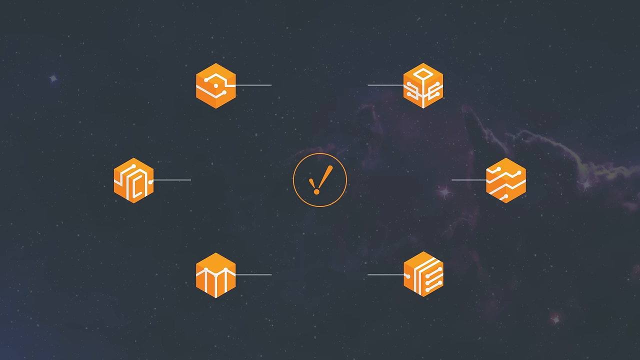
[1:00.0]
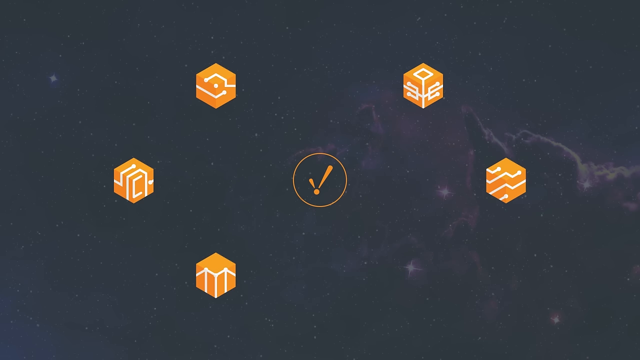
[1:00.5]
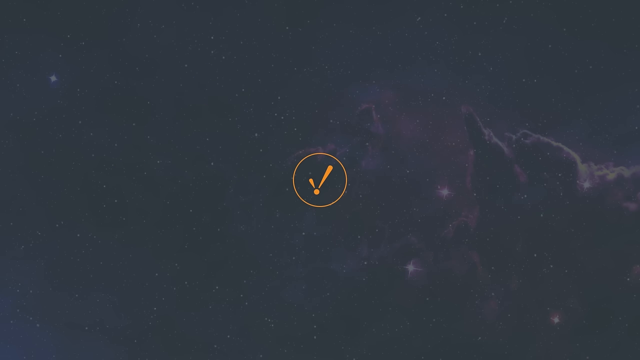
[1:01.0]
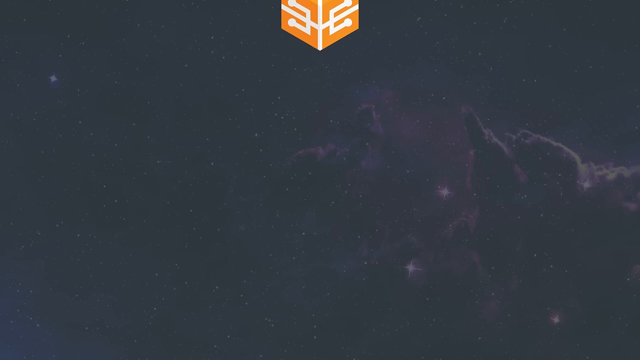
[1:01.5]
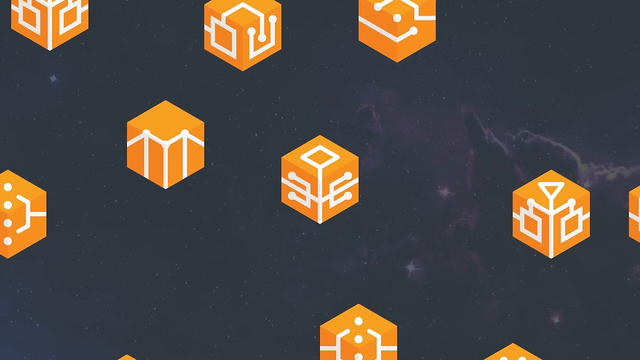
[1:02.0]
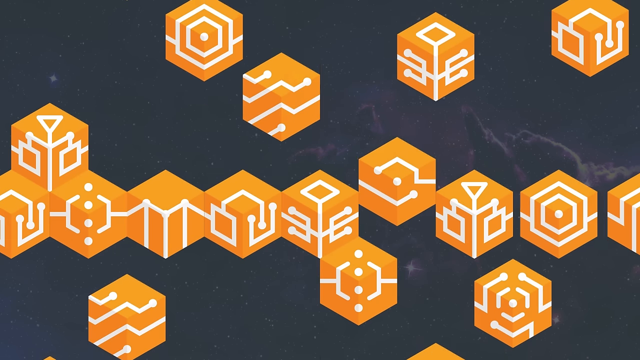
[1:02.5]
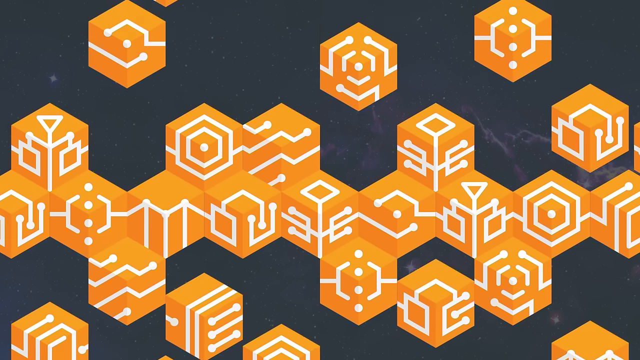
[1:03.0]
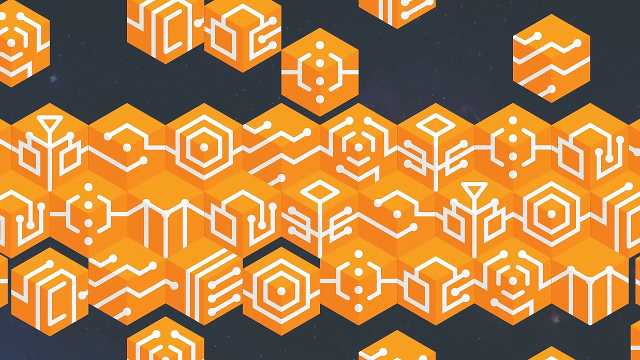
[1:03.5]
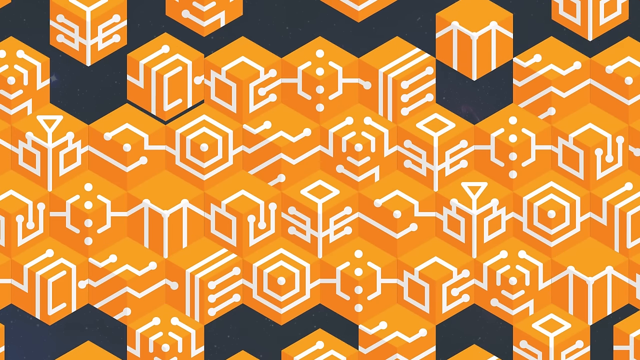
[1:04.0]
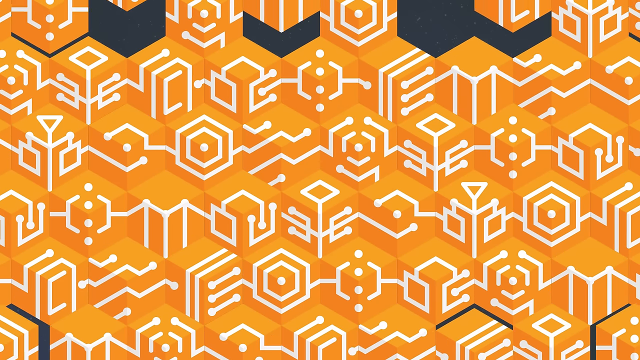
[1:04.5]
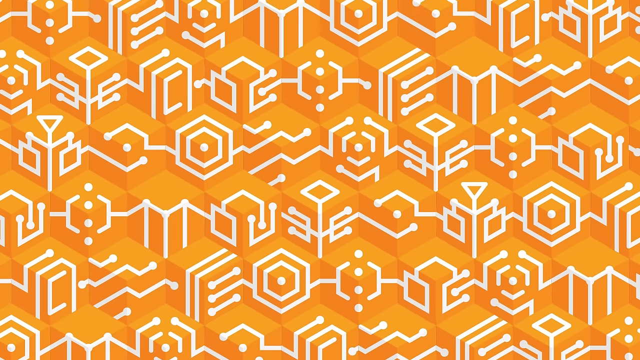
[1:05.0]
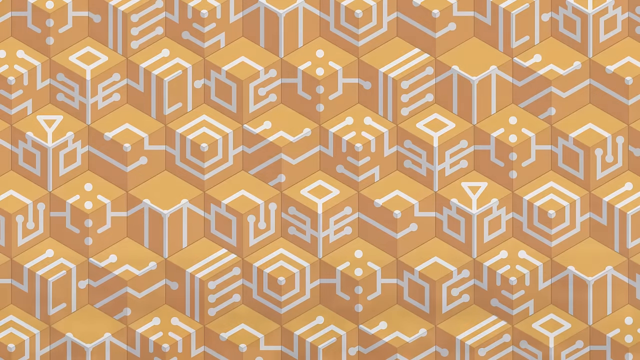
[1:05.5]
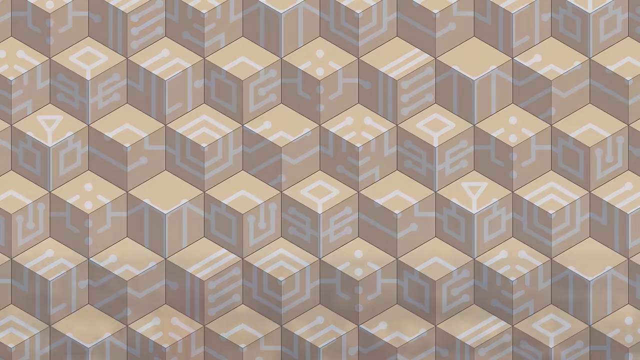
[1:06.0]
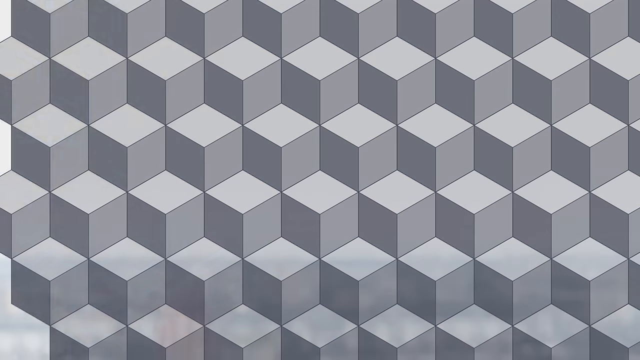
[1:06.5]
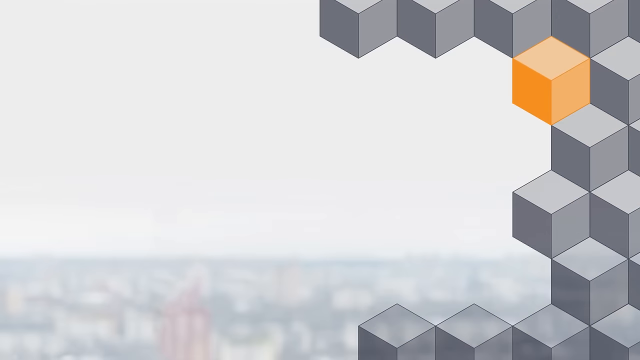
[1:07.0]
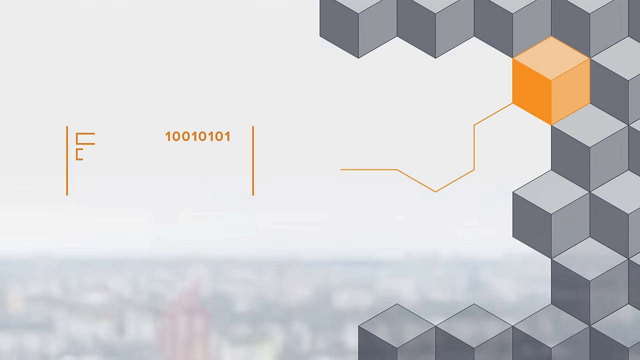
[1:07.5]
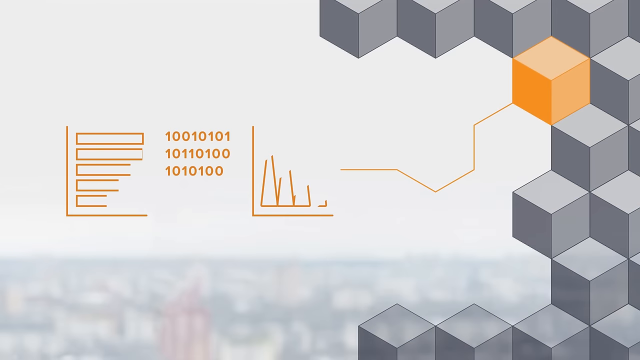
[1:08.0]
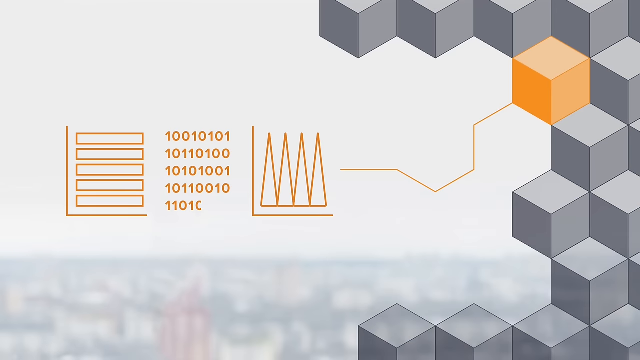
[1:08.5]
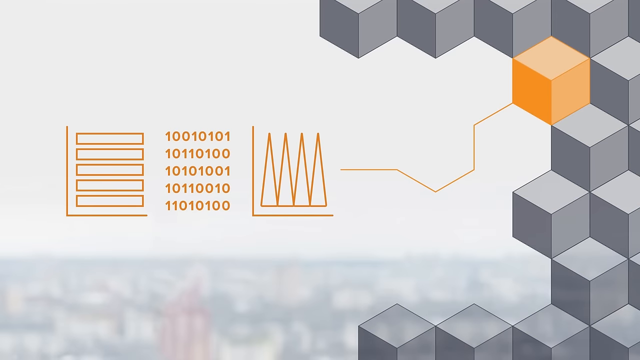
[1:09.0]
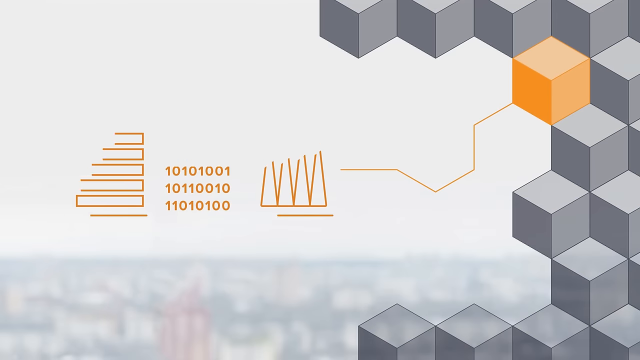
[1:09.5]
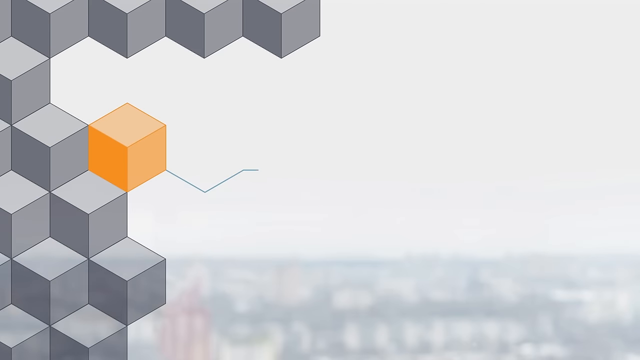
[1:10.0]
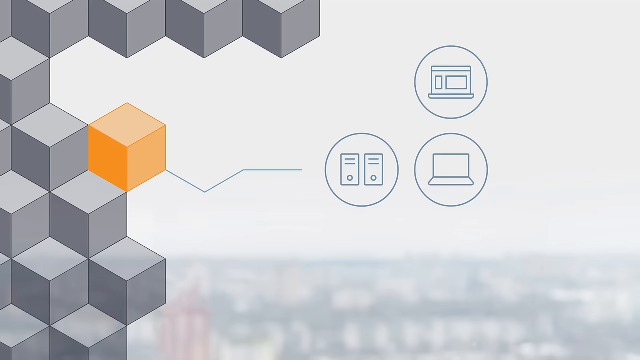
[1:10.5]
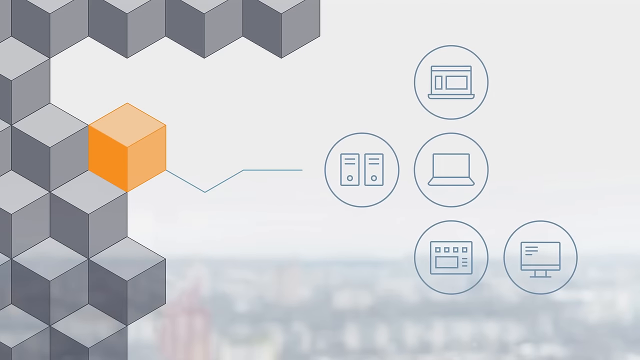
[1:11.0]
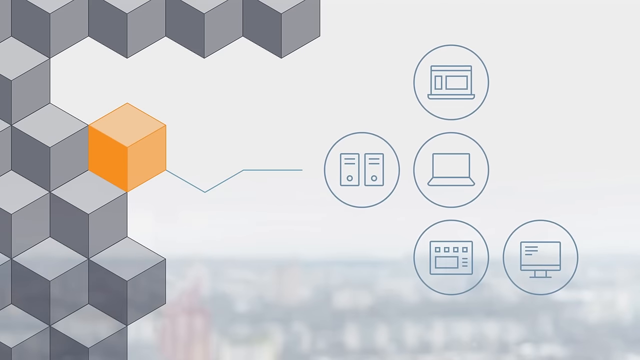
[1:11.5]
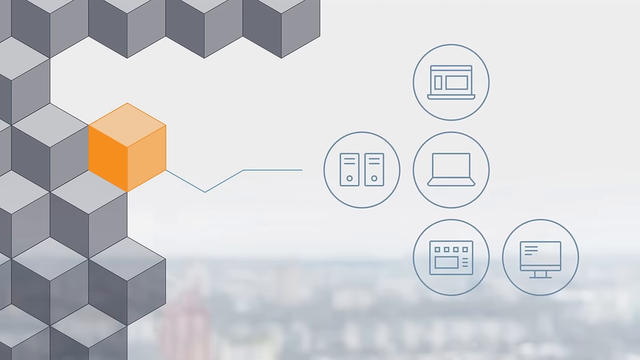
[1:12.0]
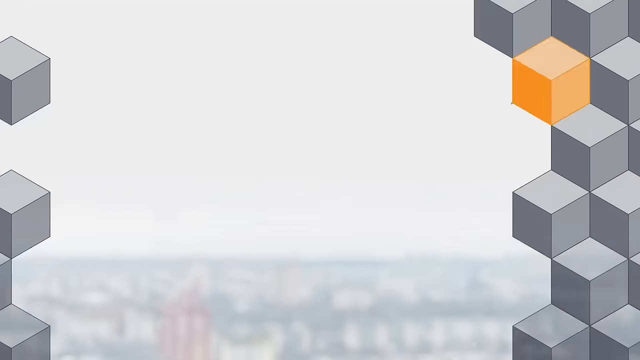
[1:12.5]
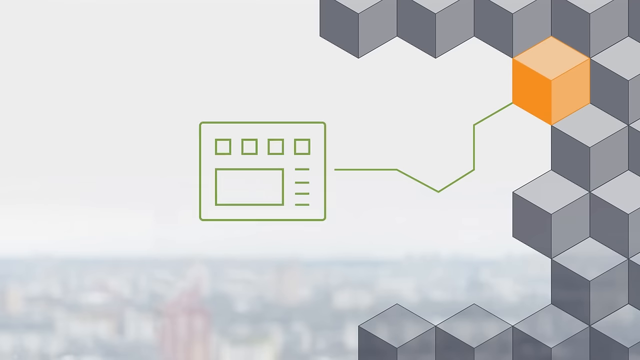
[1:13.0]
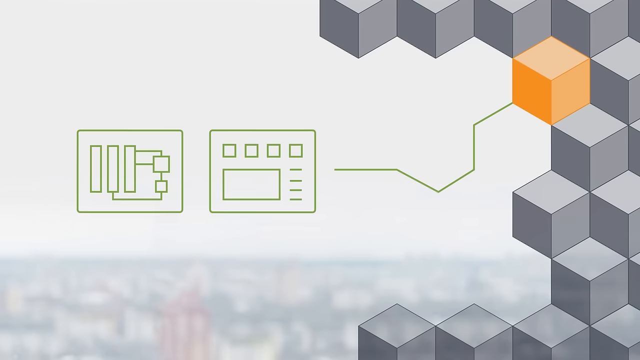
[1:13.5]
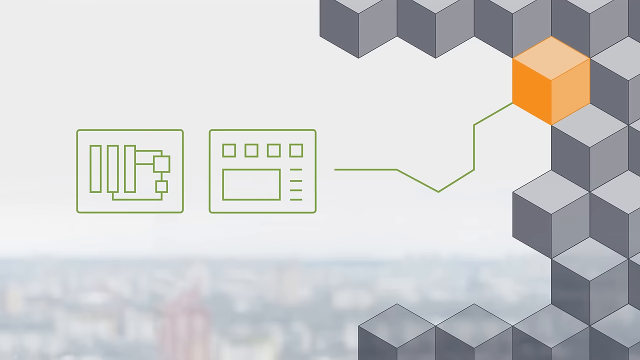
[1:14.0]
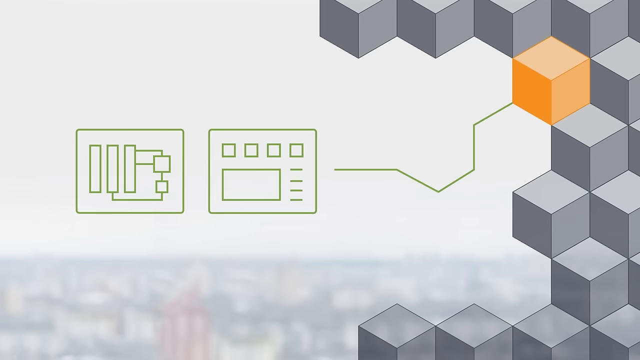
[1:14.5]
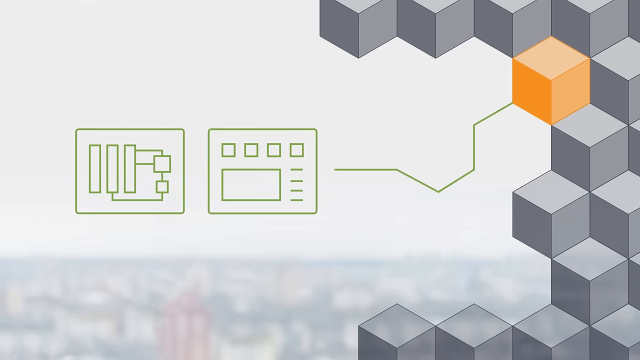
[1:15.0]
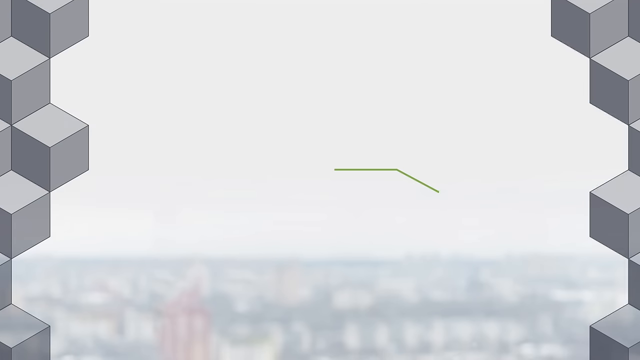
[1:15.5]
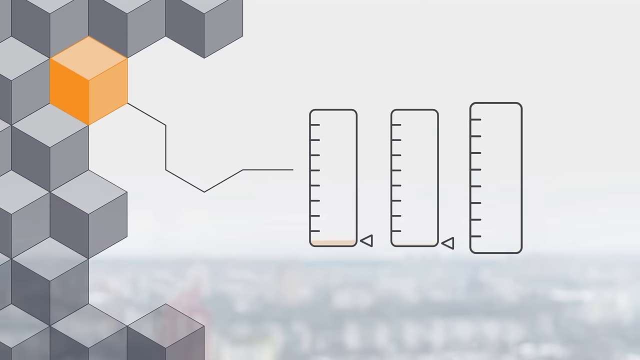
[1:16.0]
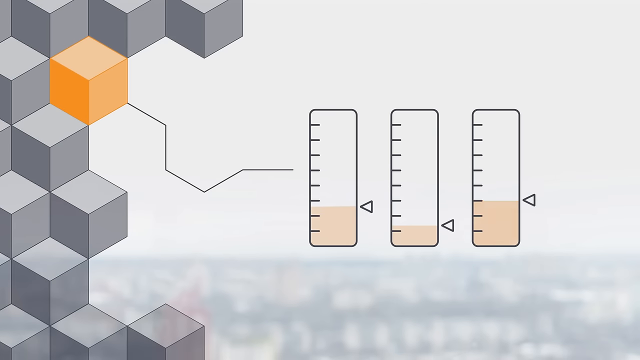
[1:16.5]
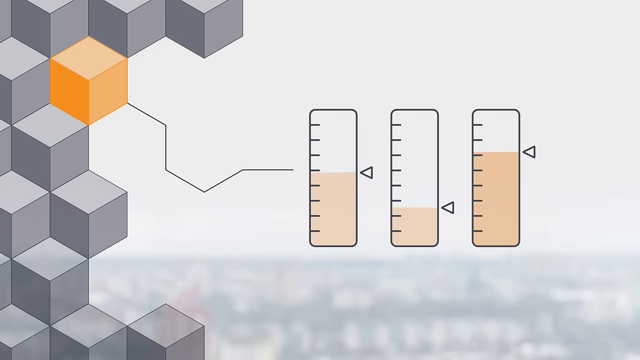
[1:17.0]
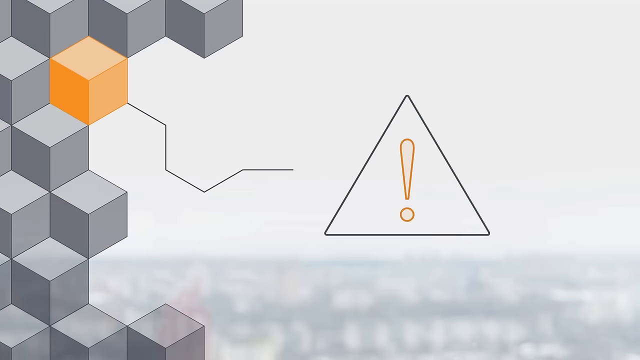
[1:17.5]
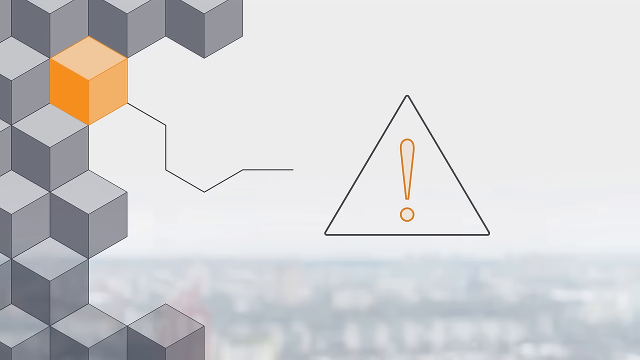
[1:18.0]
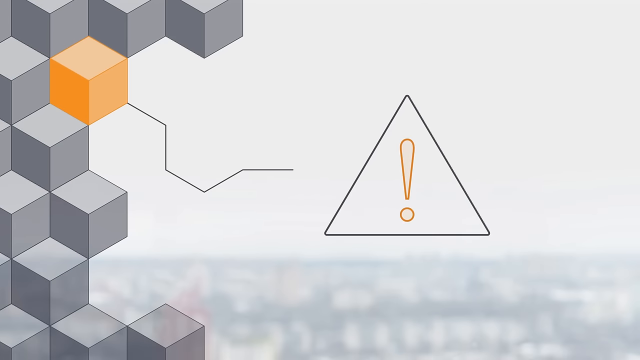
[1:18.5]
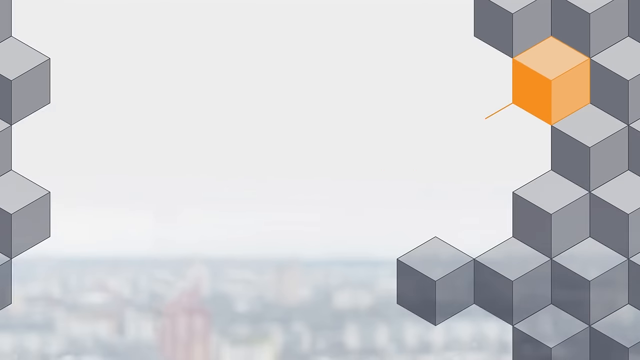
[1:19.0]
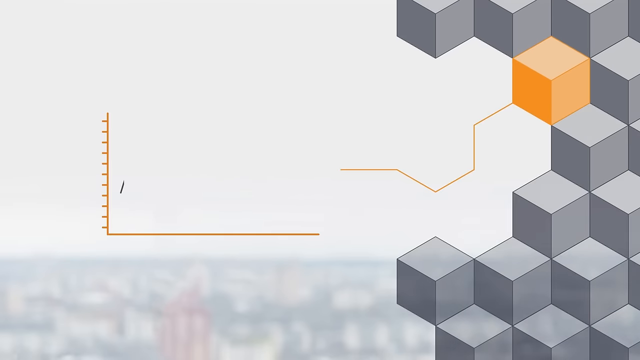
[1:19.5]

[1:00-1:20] An orange check mark is in the center, with six orange boxes outside it. Everything disappears, and six three-dimensional orange boxes appear and fill the entire screen, their interiors holding symbols that look like the inside of a computer motherboard. The orange fades out and the boxes turn into empty gray boxes. Some of the gray boxes disappear on one side, and images fill the empty portion of the screen where the boxes were removed: some show charts, some paragraphs, some images of technology, and other things, and some turn into graphs.